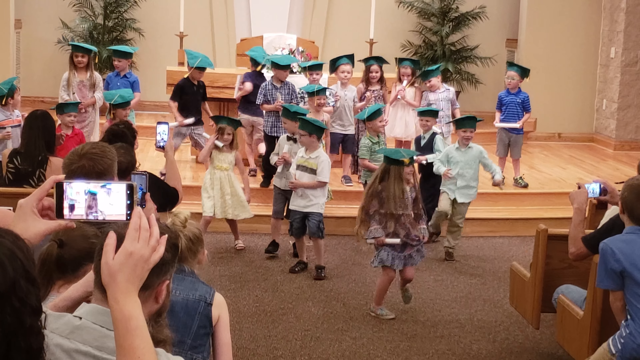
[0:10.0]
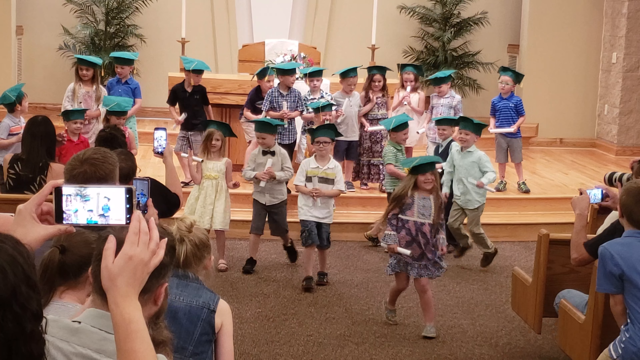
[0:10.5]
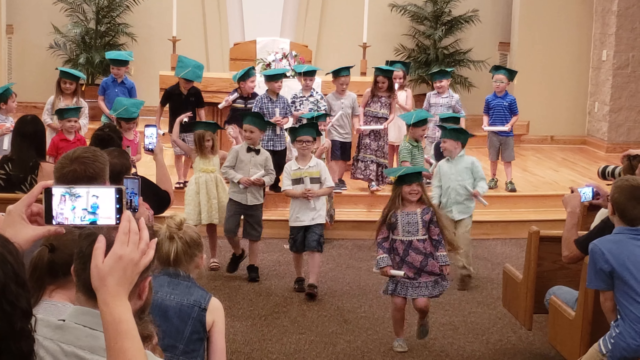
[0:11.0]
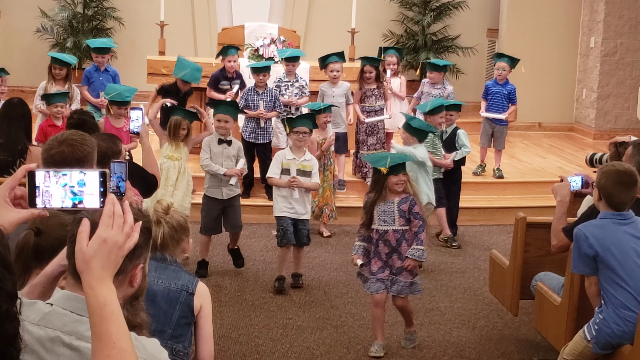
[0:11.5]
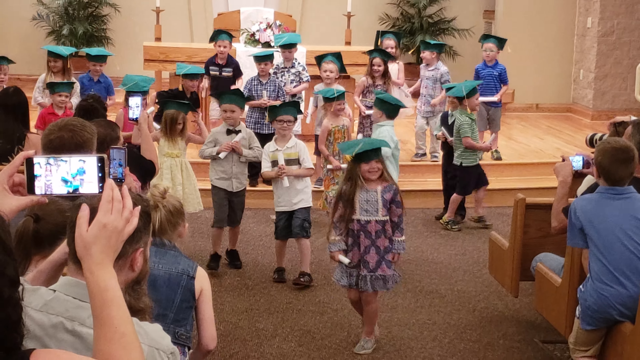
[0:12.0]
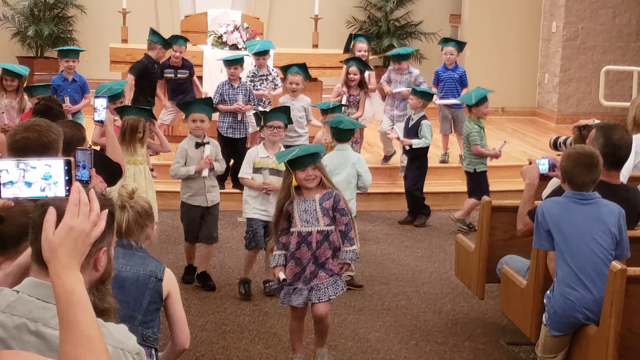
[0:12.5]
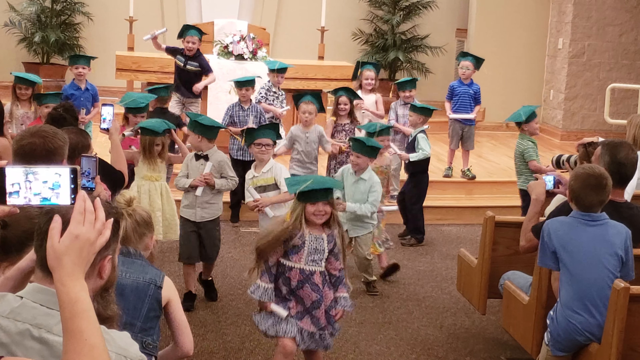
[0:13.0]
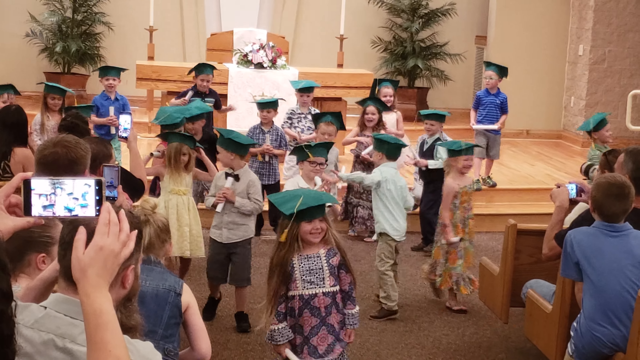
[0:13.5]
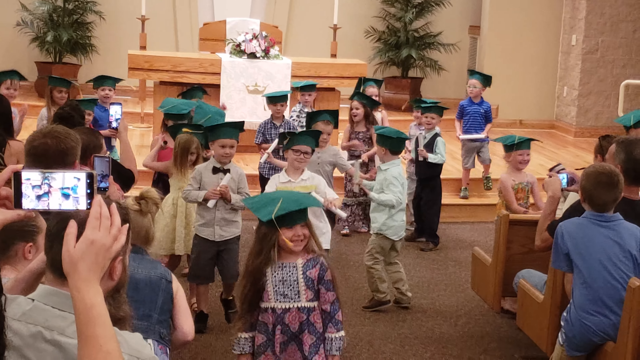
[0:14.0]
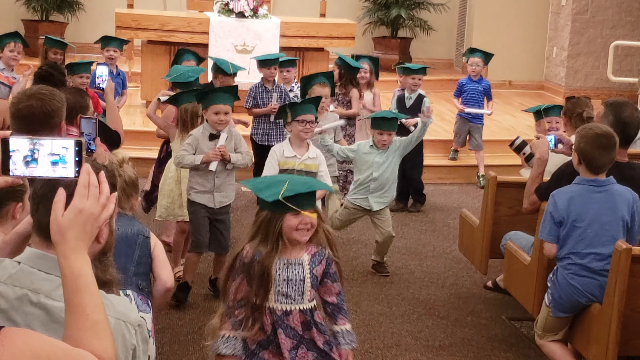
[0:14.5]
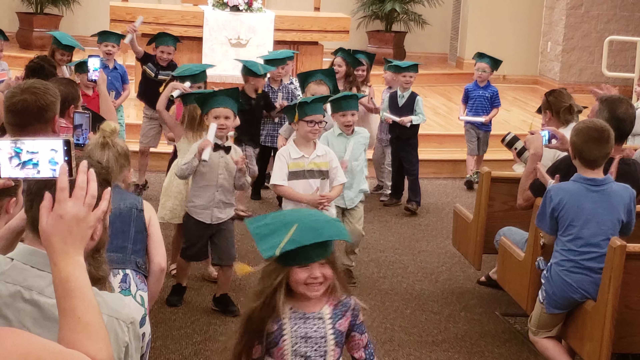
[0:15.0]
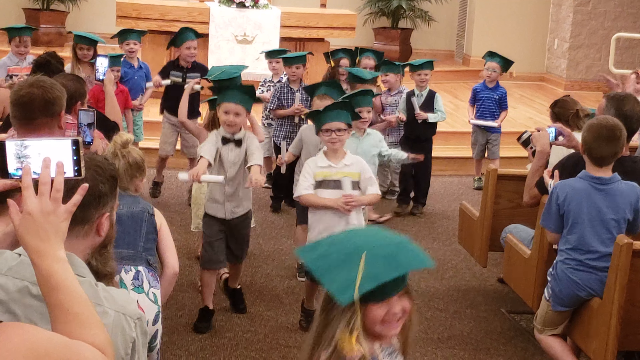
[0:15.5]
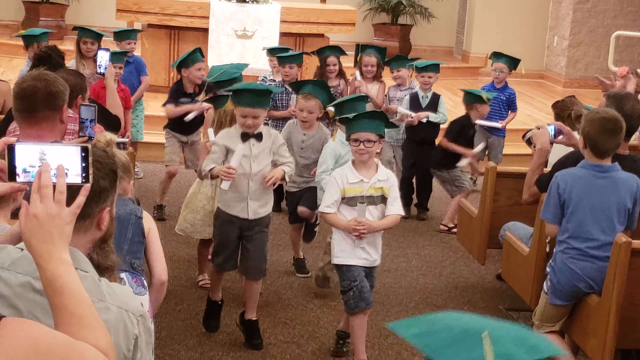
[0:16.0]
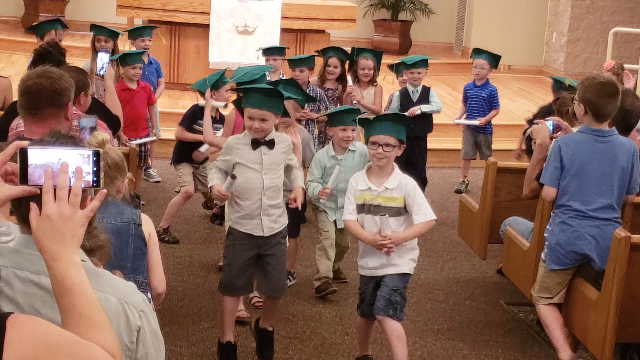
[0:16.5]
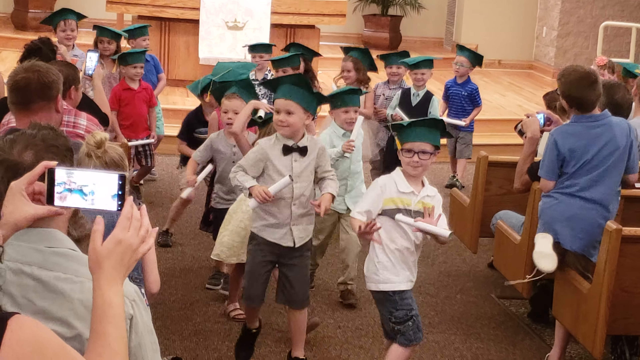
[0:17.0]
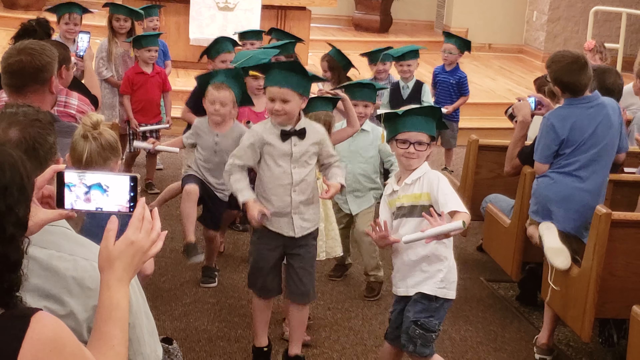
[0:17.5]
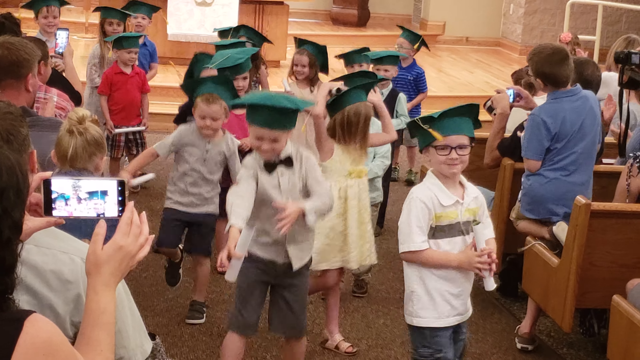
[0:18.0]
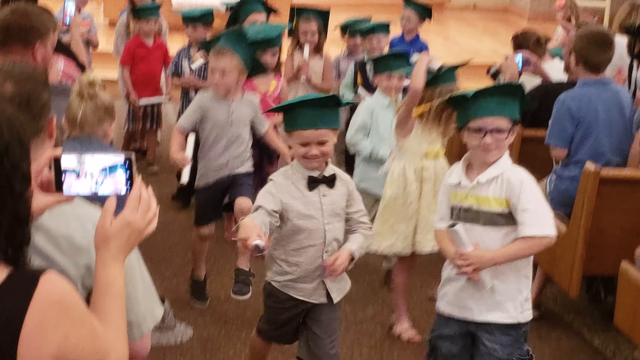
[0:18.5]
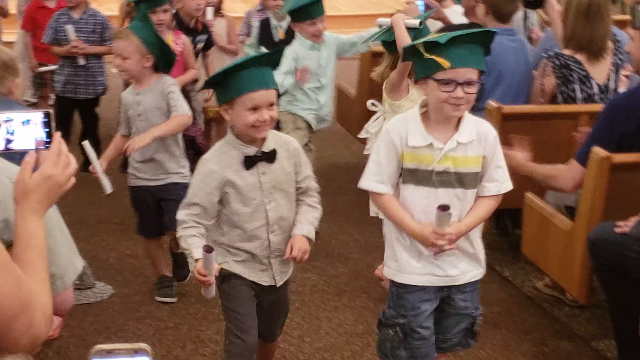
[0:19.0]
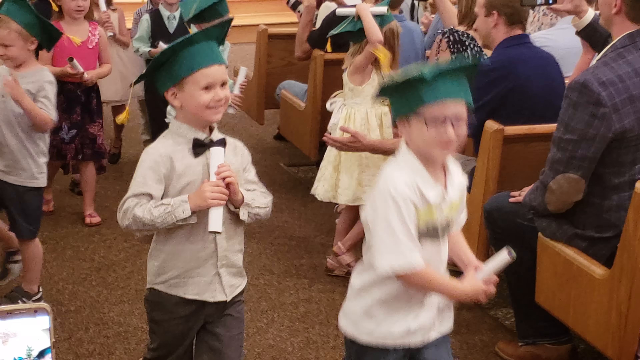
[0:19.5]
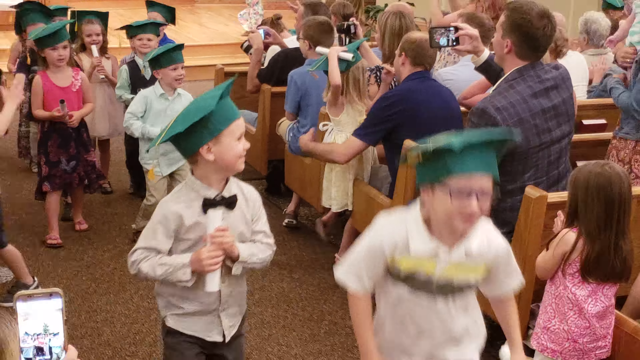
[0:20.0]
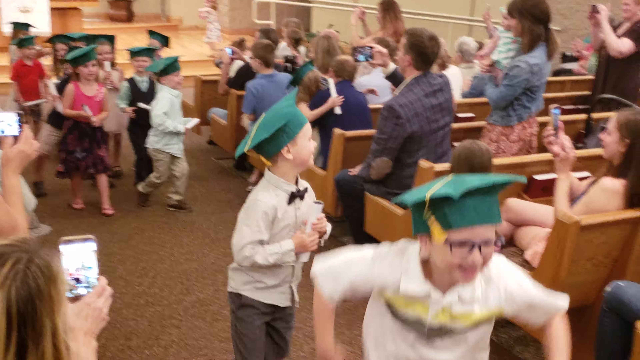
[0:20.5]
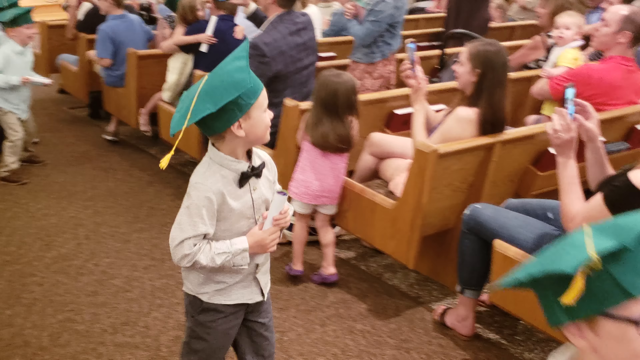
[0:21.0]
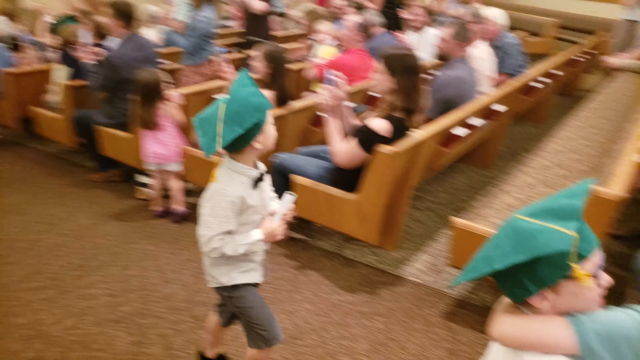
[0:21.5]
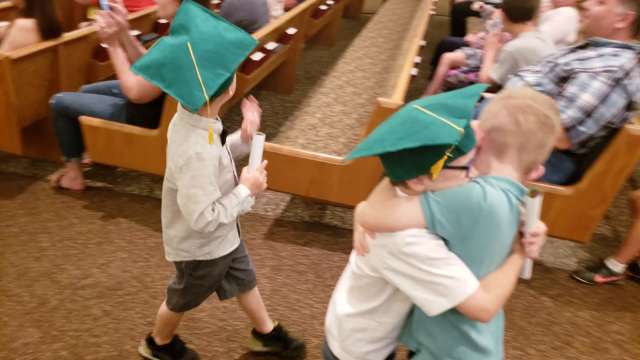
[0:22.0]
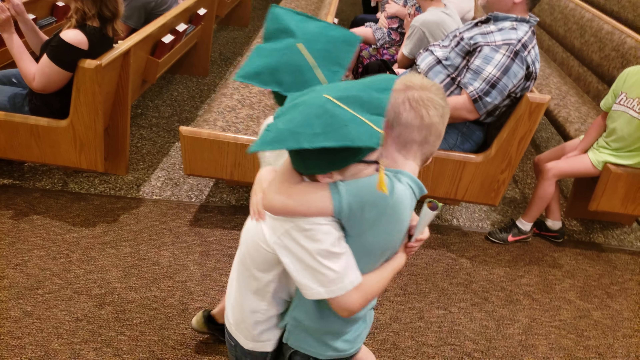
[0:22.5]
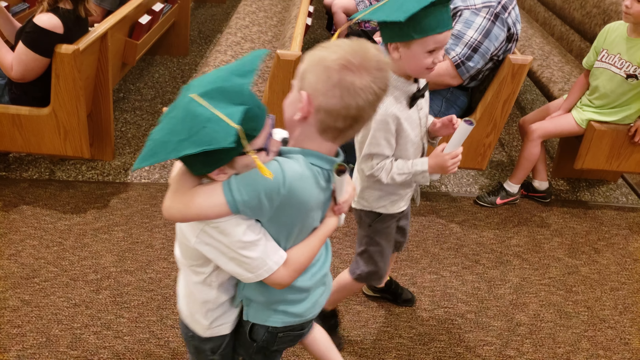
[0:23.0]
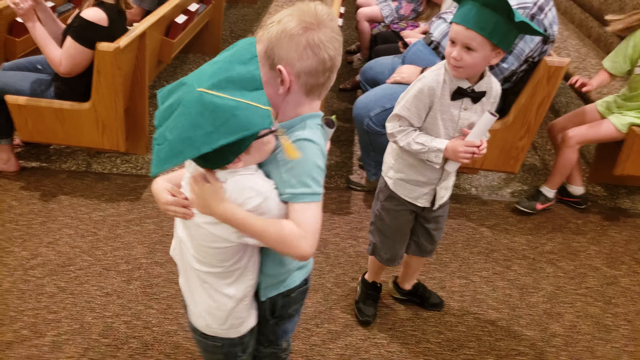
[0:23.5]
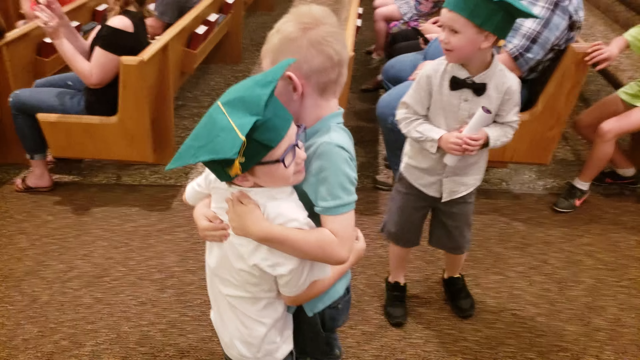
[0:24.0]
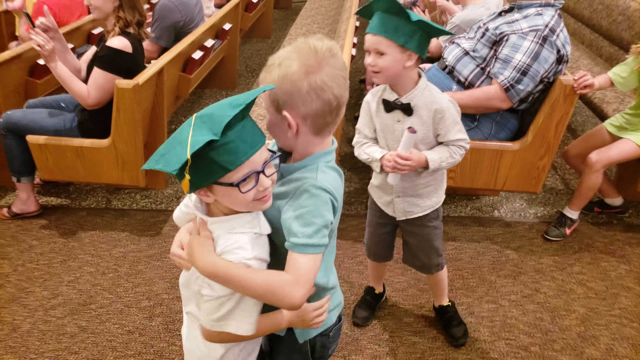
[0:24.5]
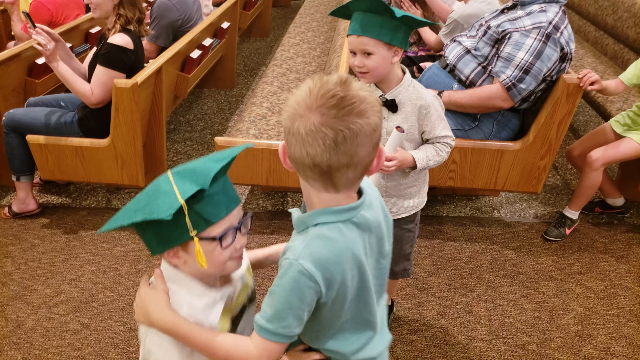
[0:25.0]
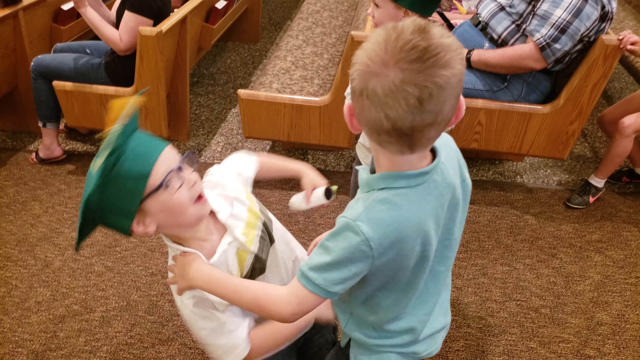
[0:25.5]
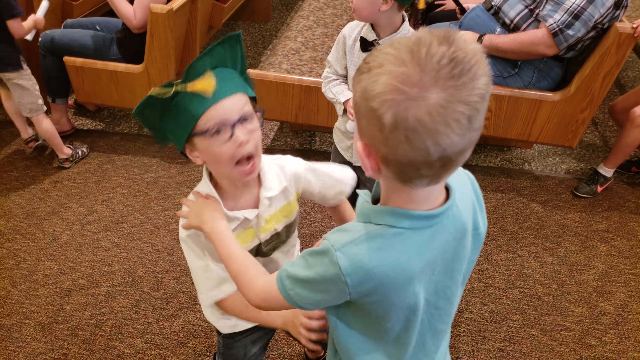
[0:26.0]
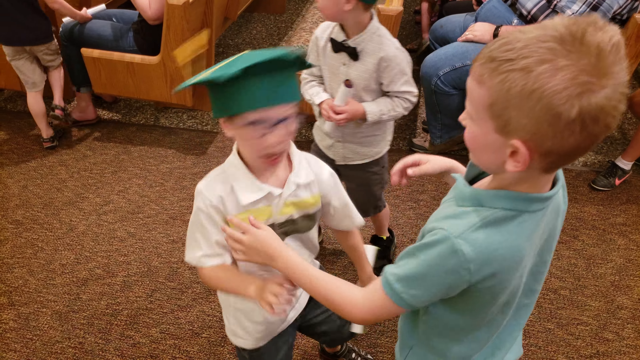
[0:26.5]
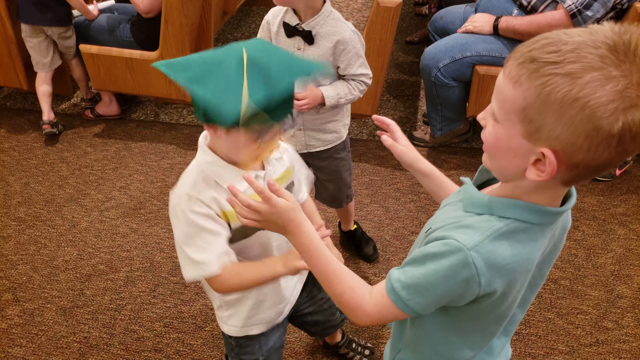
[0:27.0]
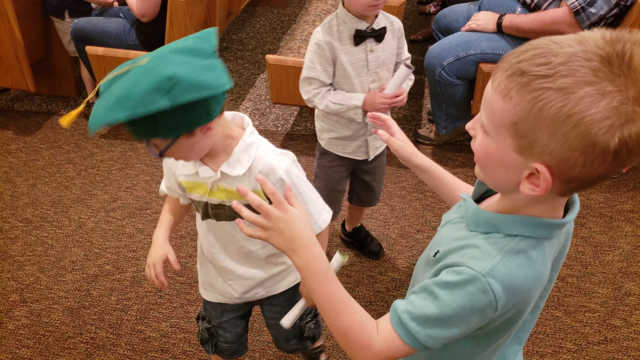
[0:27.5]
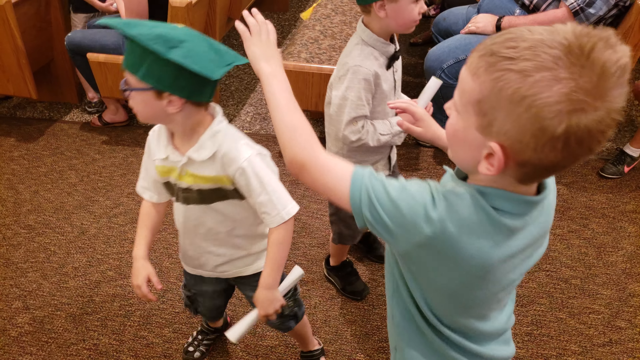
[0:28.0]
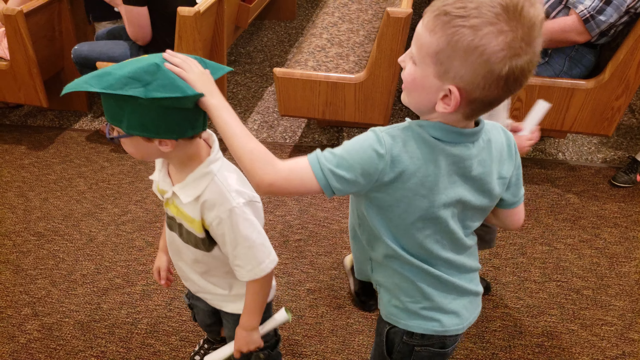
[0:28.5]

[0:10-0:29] The kids in the church are more active. They appear to be having some kind of ceremony celebrating a milestone, like a graduation. They wear green graduation caps and hold some kind of diploma, which they wave around excitedly. The kids look like they are maybe second or third graders; possibly it marks a Sunday school milestone, a confirmation, a baptism, or preparation for communion. It is a Christian church, probably Protestant. On the wall is a reference to communion of the Lord's Supper, with grapes, bread, wheat and a cross in the background. People in the pews watch and record the event, and the kids jump around, clearly very excited.